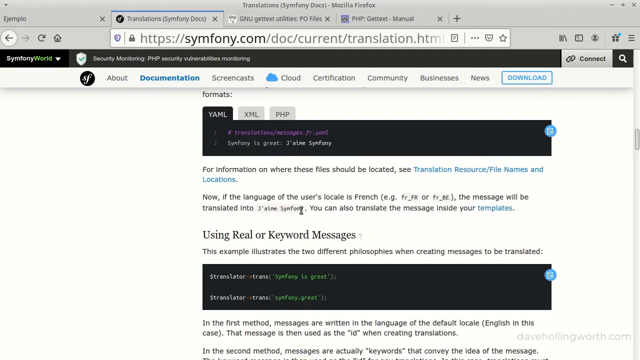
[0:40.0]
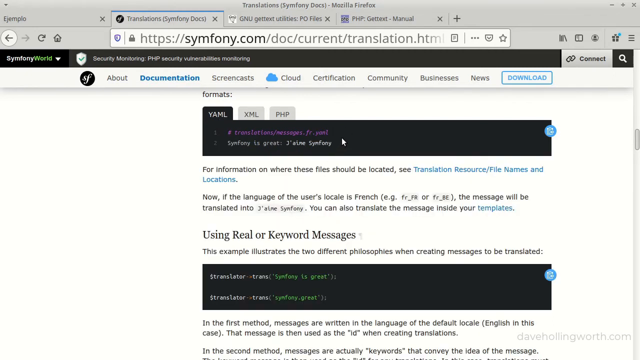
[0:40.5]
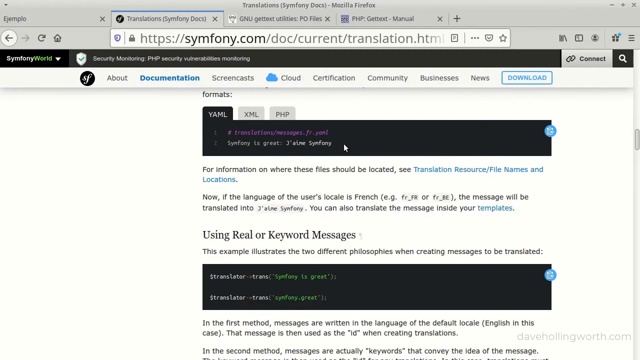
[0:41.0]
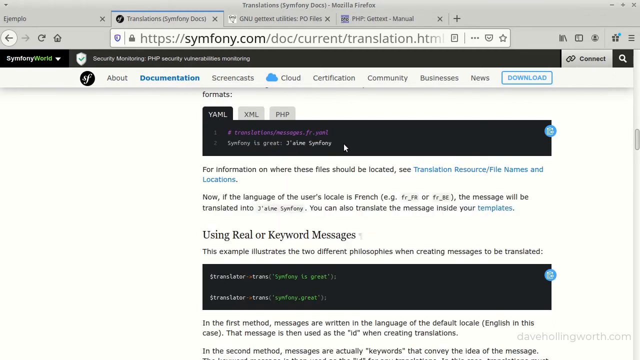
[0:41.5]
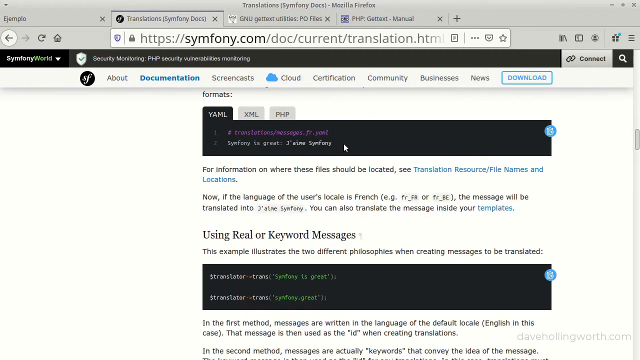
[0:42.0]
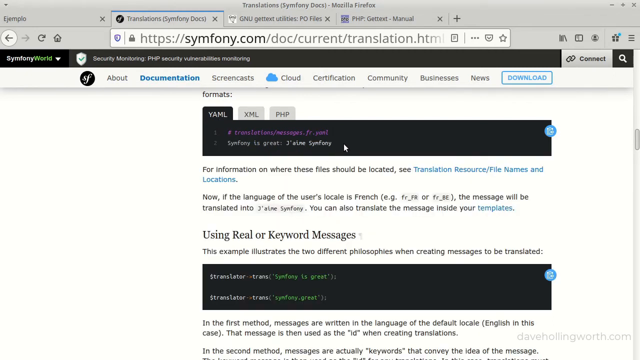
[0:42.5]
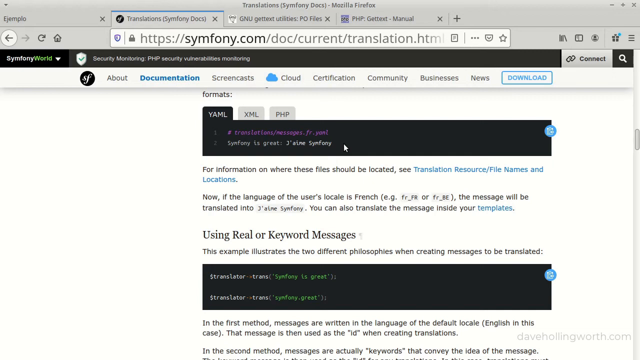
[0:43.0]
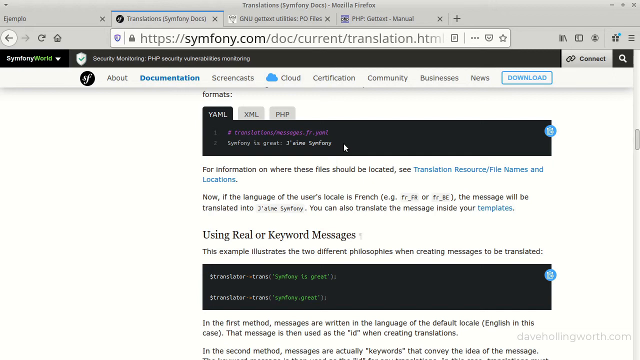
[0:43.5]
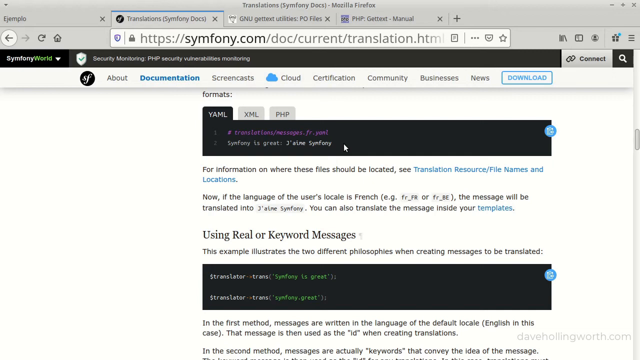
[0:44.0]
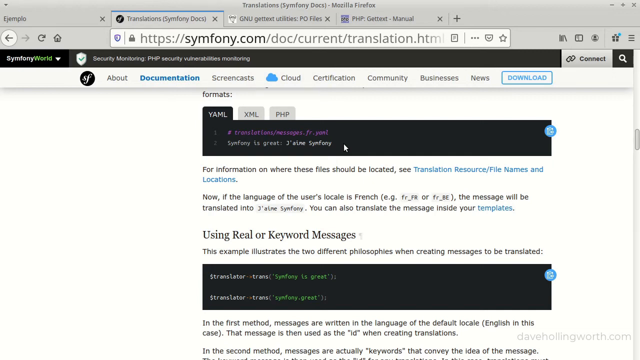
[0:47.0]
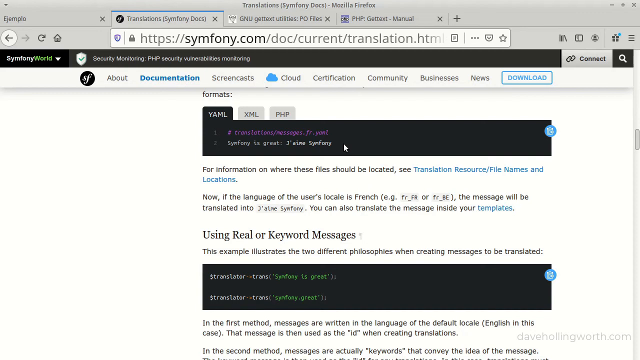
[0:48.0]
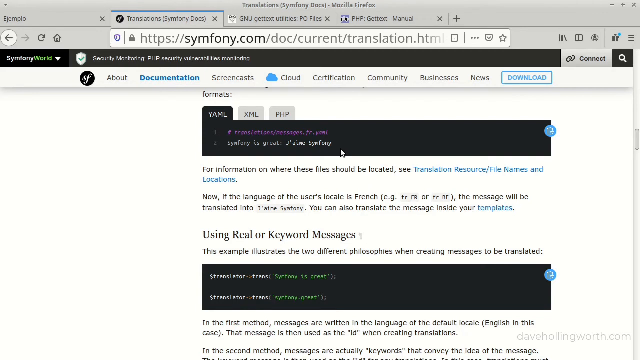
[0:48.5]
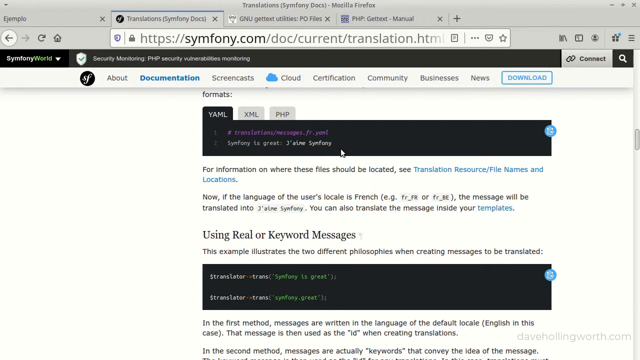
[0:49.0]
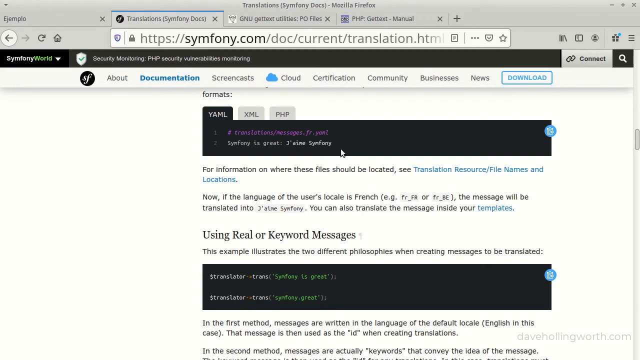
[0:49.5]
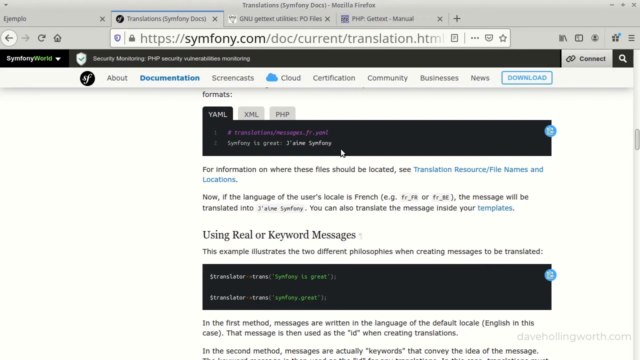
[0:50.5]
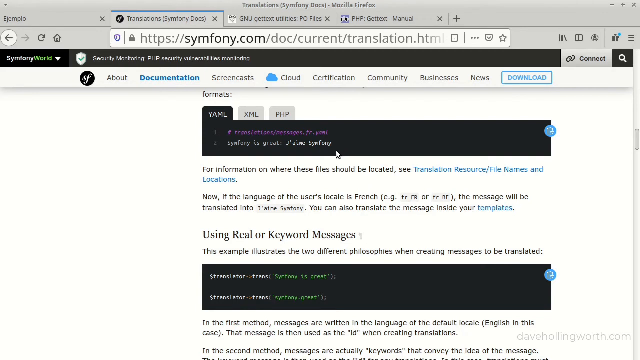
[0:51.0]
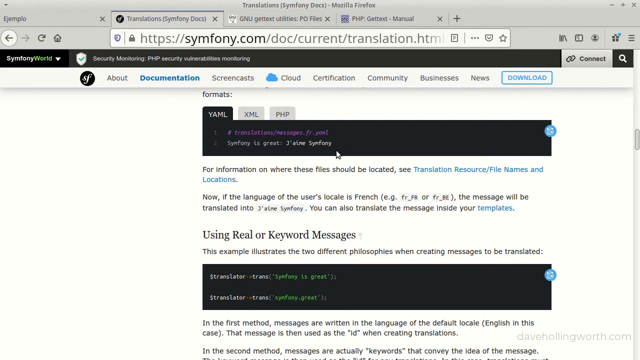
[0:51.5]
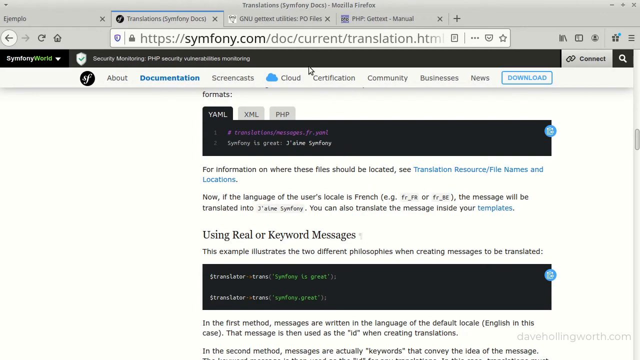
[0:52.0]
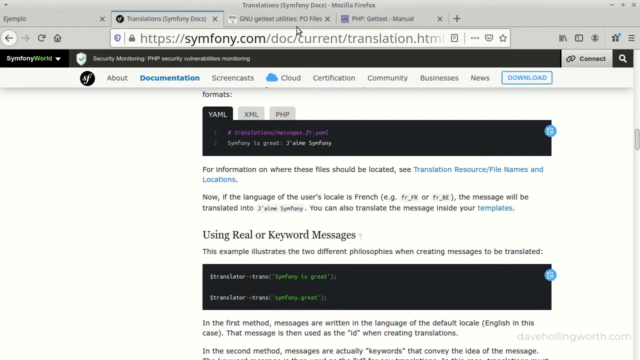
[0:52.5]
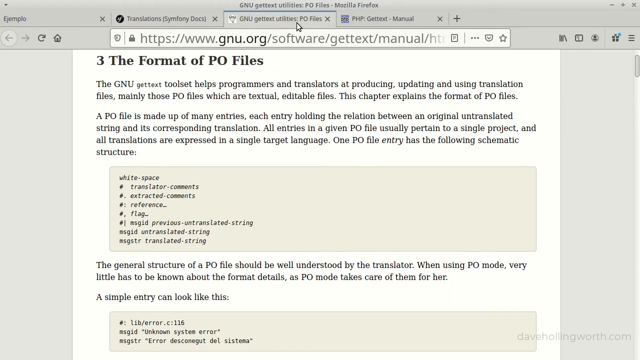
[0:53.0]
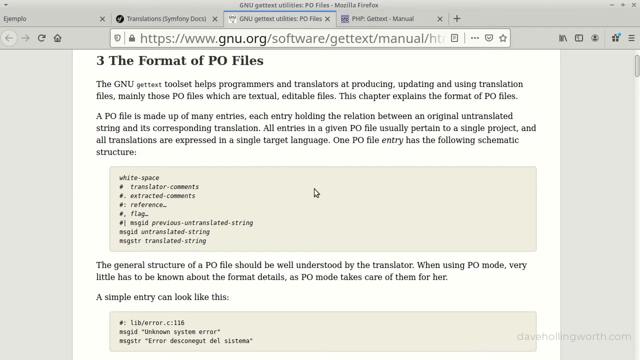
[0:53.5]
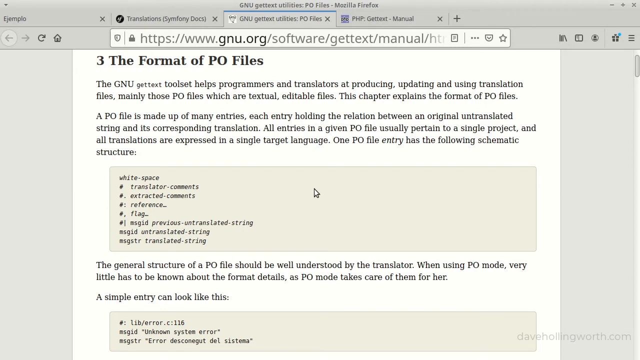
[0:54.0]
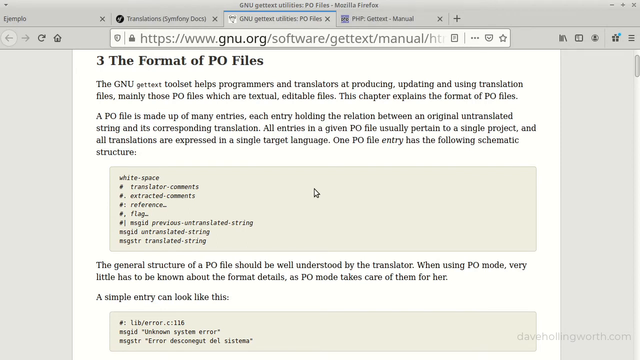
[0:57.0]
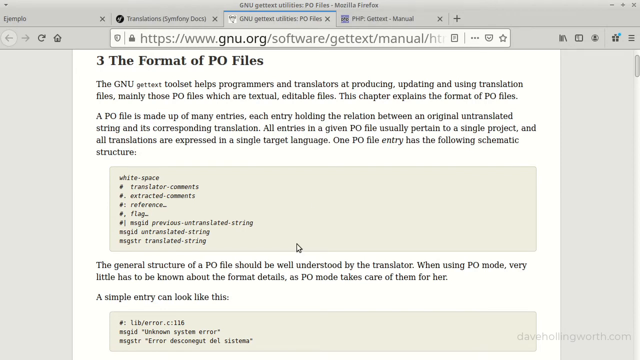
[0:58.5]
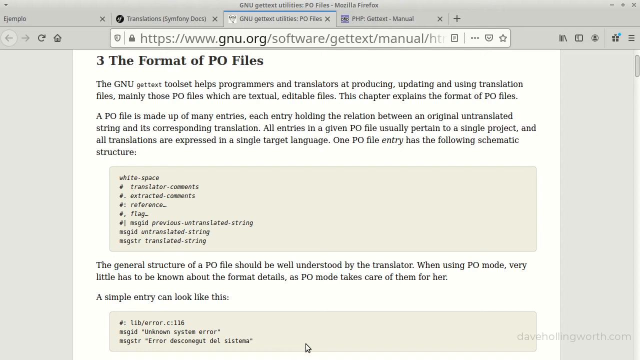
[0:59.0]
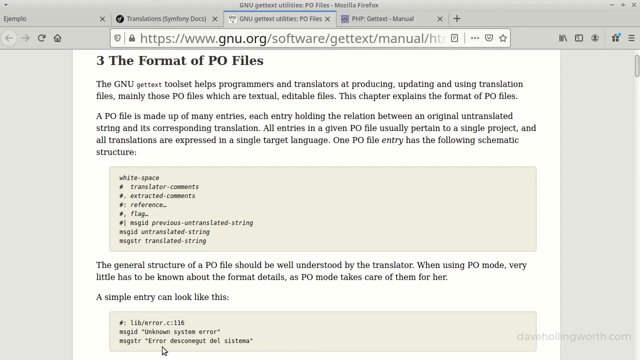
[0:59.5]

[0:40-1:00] The YAML example is still being reviewed: two short lines of purple, color-coded code read "translation messages, French, symphony is great", an example of translating a message to French in YAML format. The web browser then switches to another tab, GNU.org, where an article about GNU text is open with a title about the format of PO files, a brief explanation of what a PO file is, and an example entry below showing its structure, explained in detail. A text box with various lines of code is quickly reviewed.